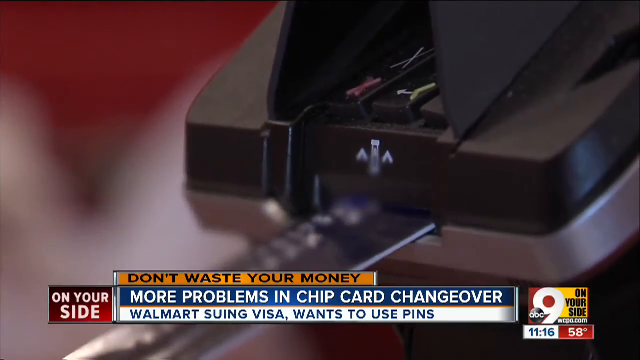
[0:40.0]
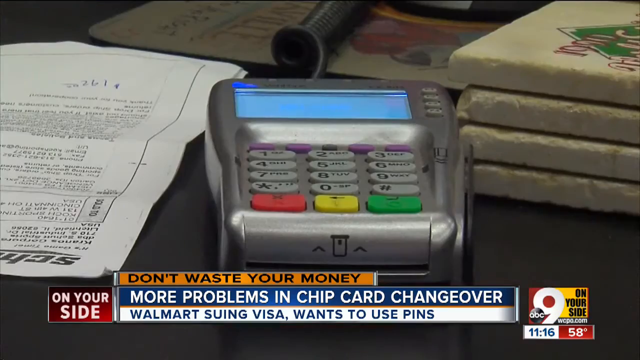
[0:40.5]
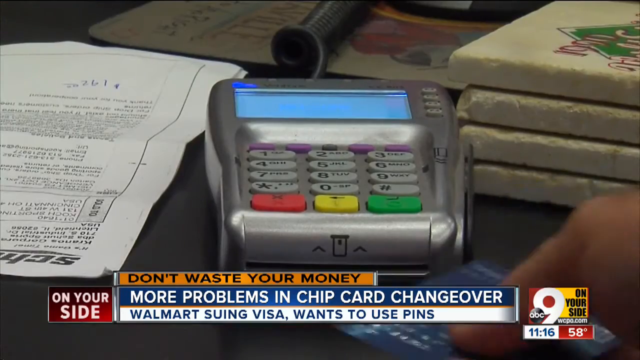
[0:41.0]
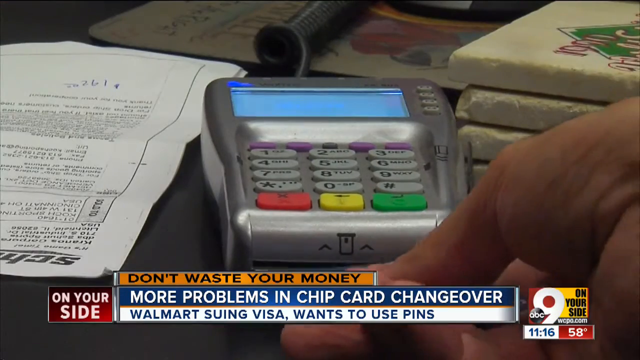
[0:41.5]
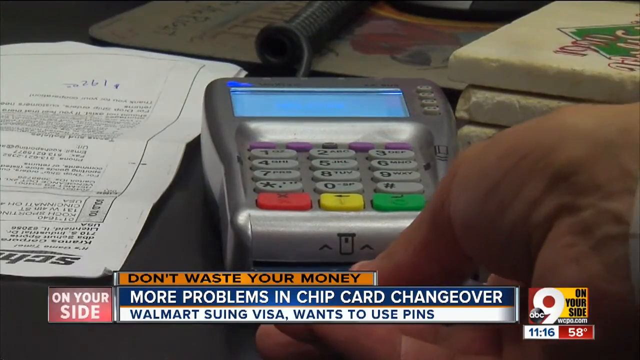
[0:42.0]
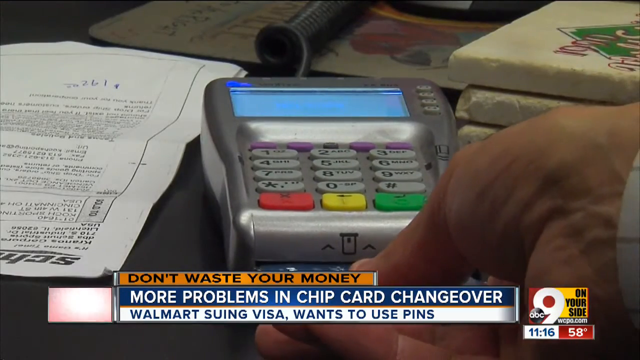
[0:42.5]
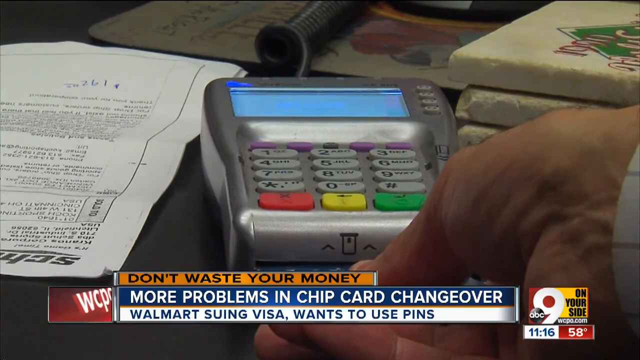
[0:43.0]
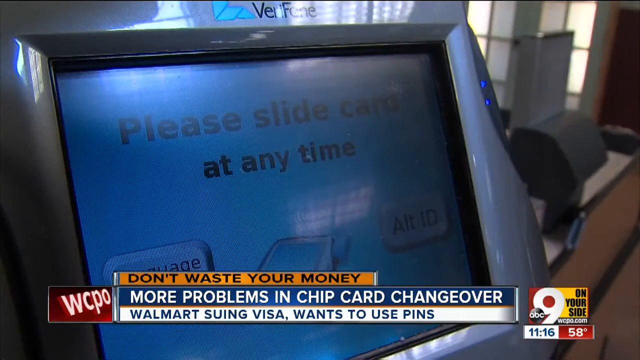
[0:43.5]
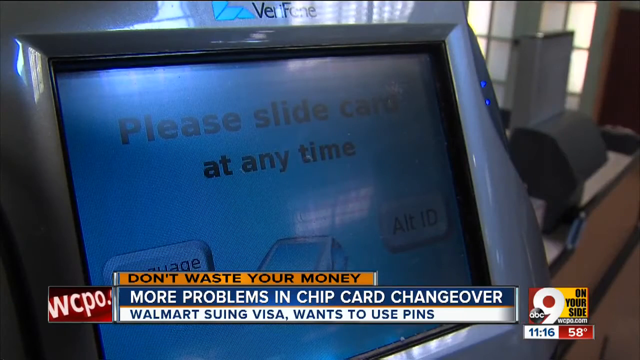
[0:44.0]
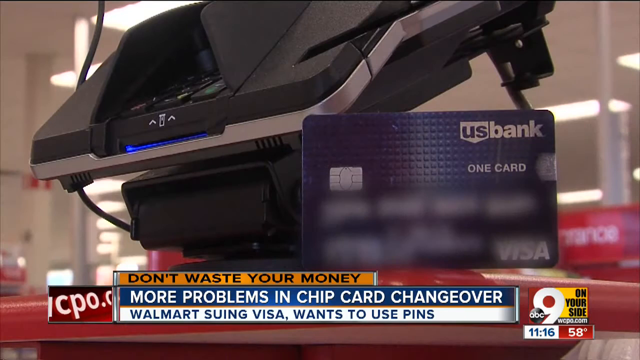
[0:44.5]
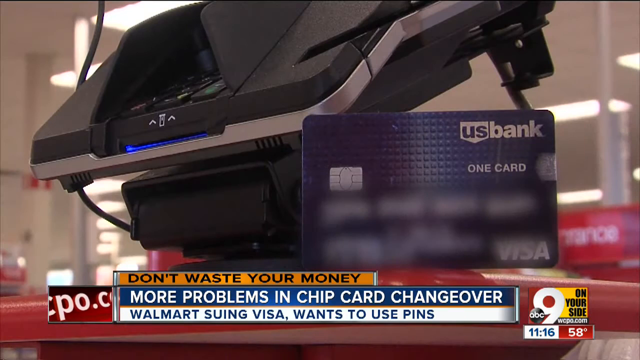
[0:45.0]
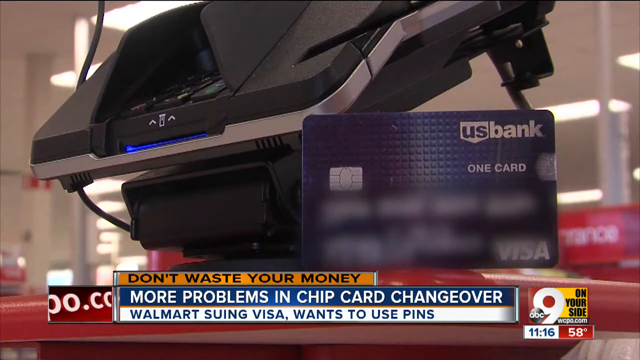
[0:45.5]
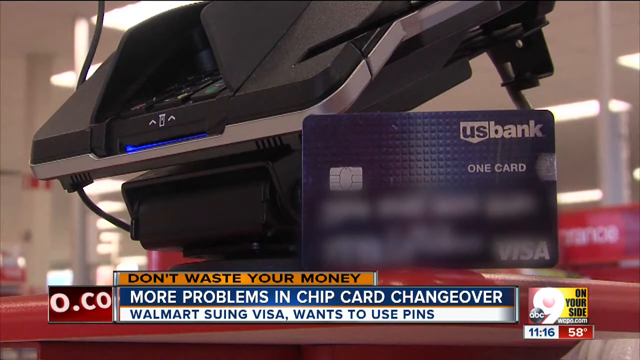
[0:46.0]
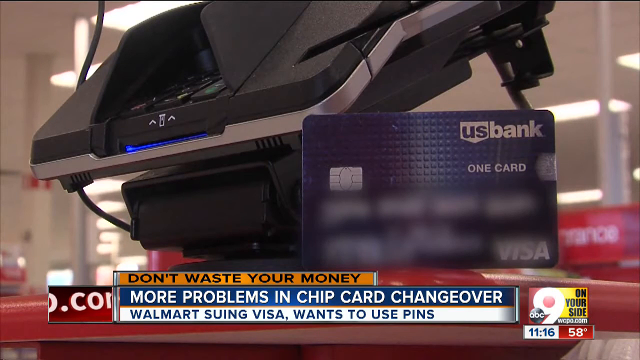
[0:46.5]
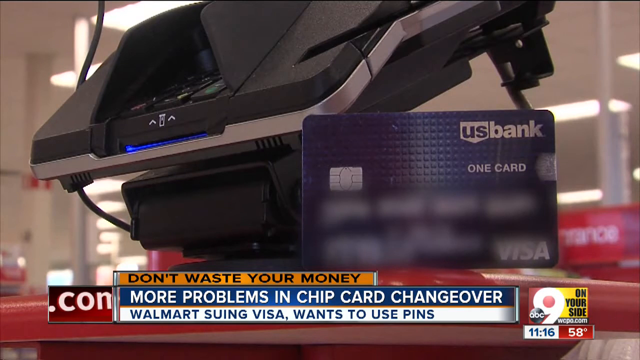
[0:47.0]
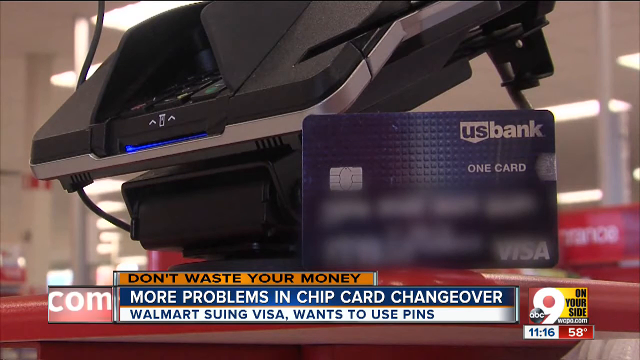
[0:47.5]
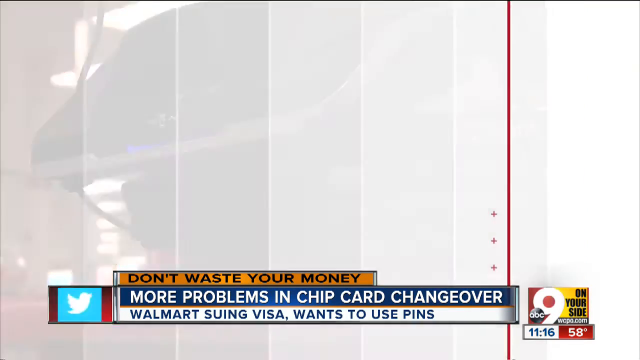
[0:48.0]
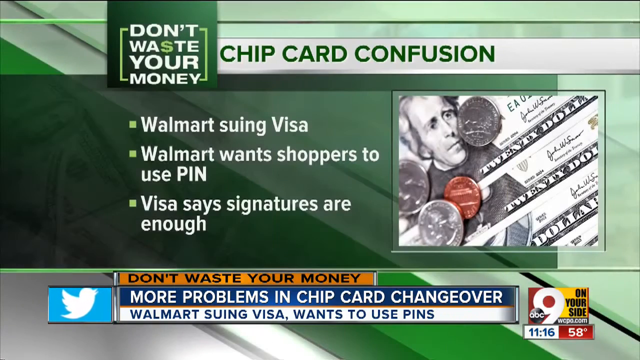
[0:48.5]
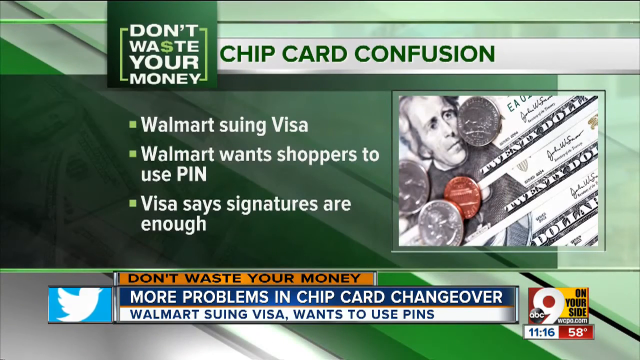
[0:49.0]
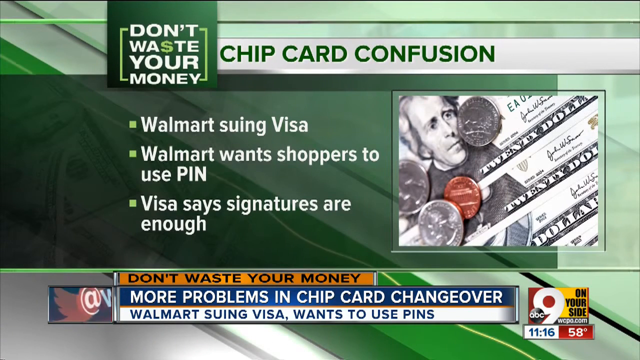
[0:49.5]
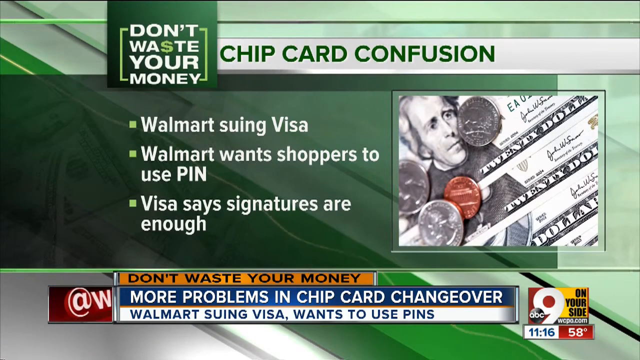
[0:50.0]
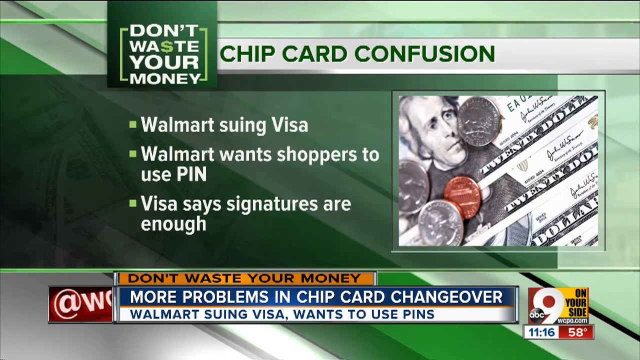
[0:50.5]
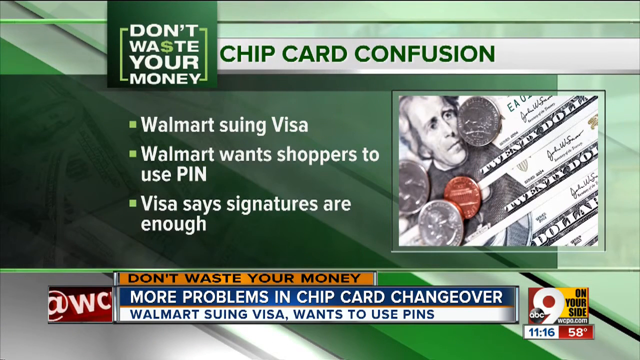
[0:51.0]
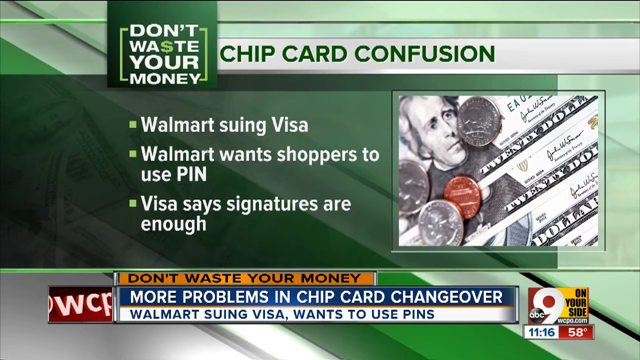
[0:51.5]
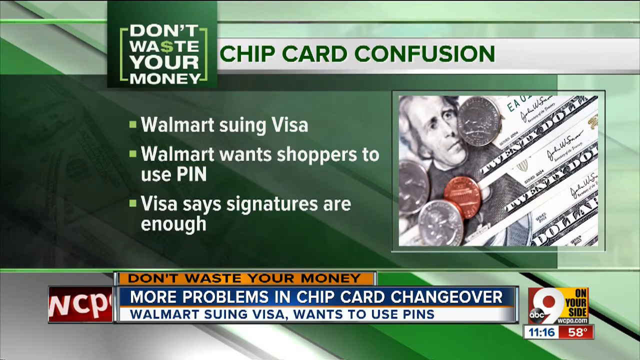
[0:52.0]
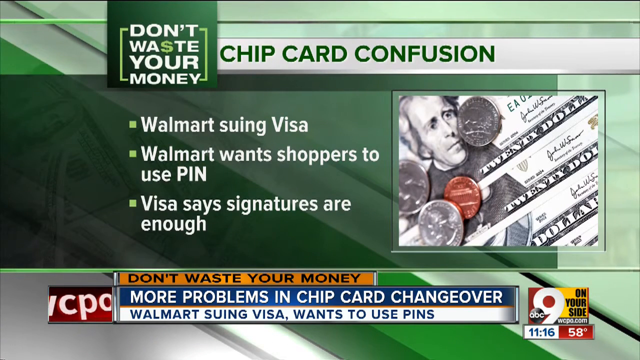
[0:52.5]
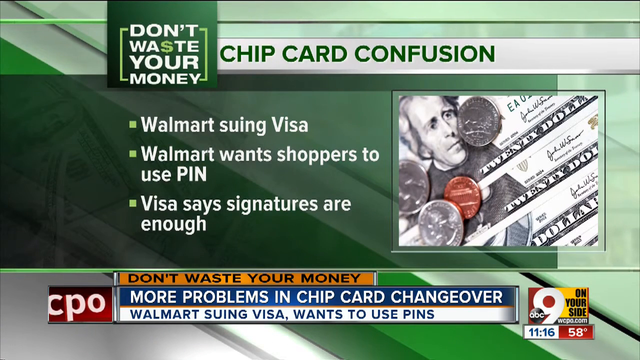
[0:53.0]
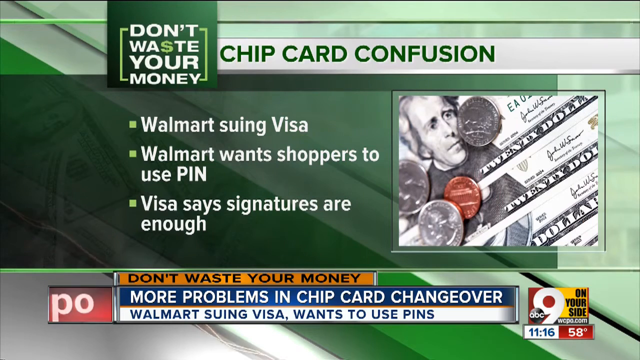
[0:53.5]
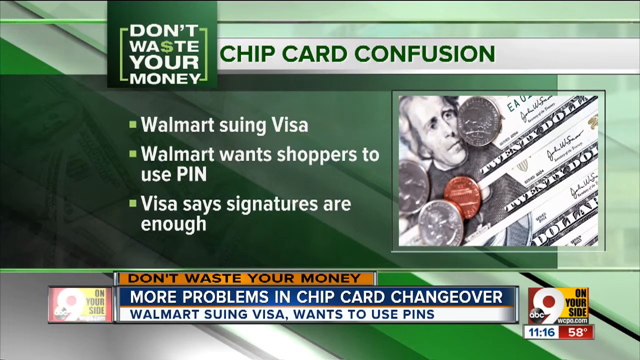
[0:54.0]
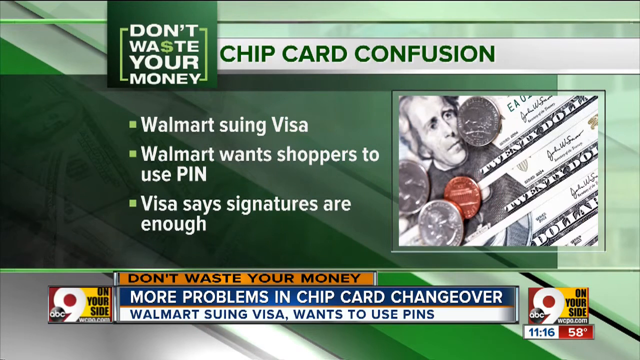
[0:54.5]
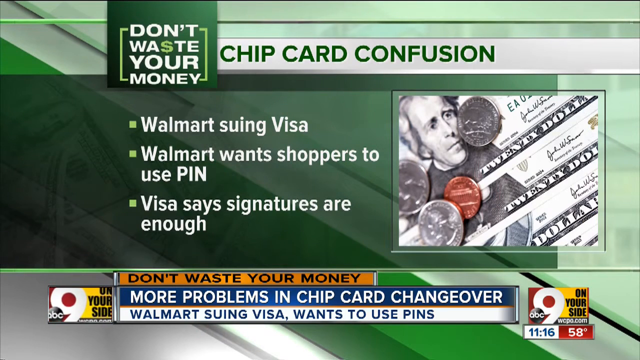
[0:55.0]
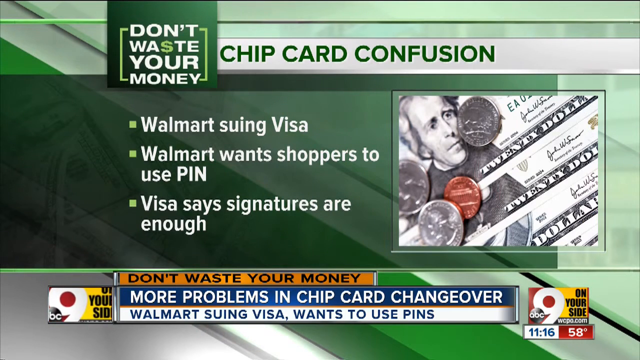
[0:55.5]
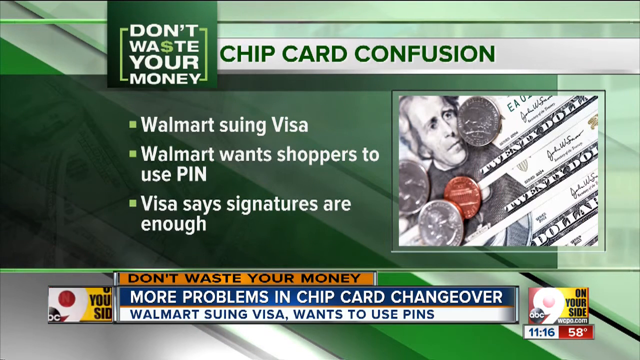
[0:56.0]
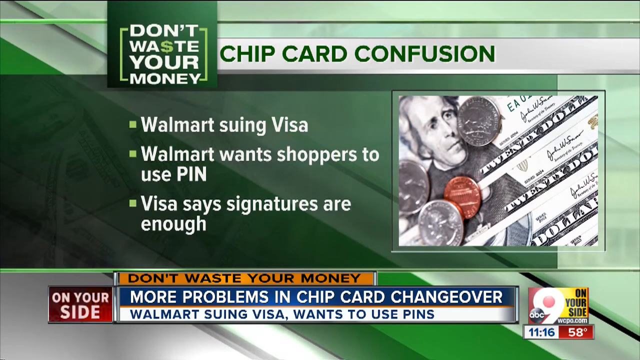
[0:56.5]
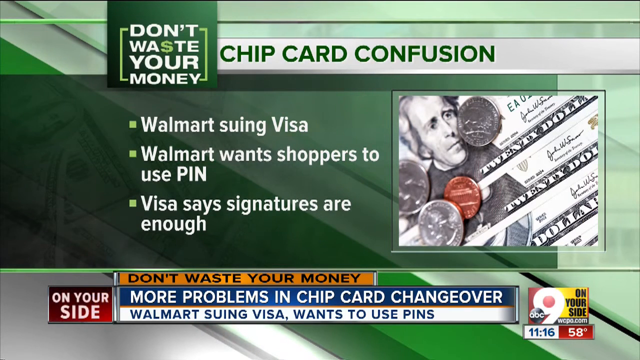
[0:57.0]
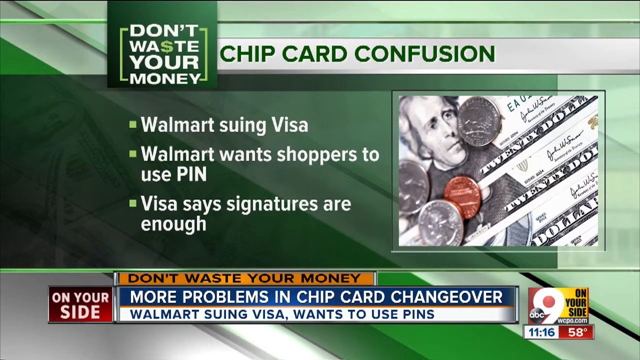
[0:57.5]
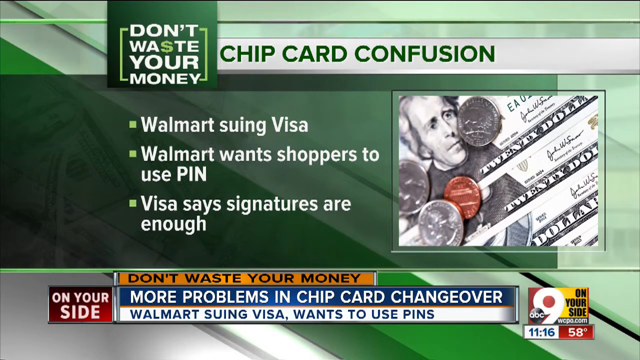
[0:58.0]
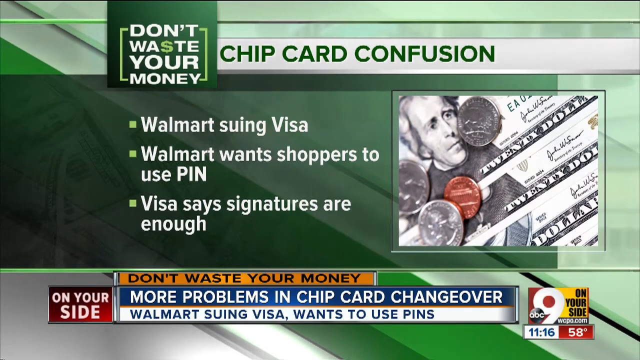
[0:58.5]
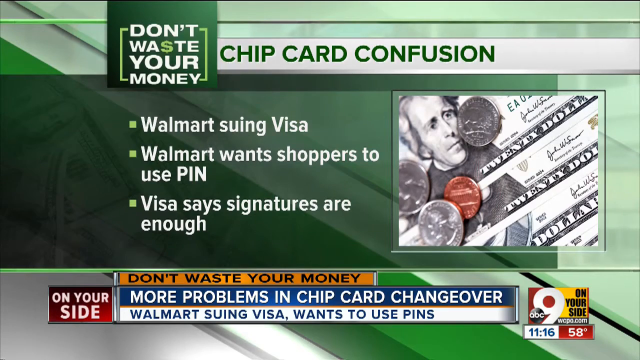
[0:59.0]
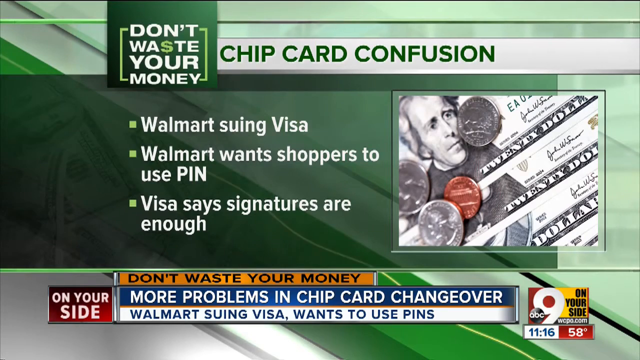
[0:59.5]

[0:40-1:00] A person slides a card into the bottom of a different credit card machine, which is sitting on a desk full of papers and other things. The scene switches to a card reader that is more of a video screen type, reading "please side card at any time." Another switch shows the U.S. Bank card with a machine behind it; the card is standing up, almost looking like it stands on its own, in a business-type setting. The camera fades and kind of scrolls to the left, revealing a new scene. At the top, a small darker green box reads "don't waste your money." The top border, white with green writing, reads "chip card confusion" in bold lettering. In the middle of the screen are three bullet points: "Walmart suing Visa," "Walmart wants shoppers to use PIN," and "Visa says signatures are enough." To the right is a picture of three dollar bills, not fully visible, with some coins on top of them and the picture of the president on the bill.